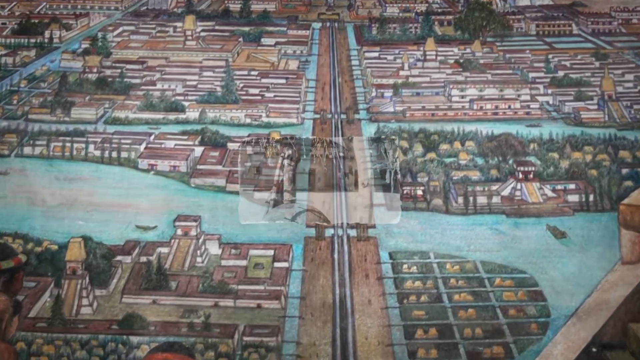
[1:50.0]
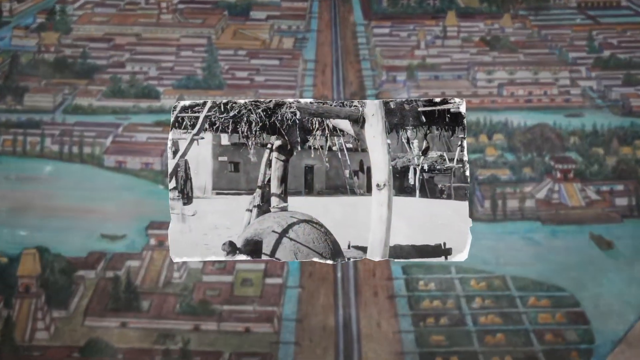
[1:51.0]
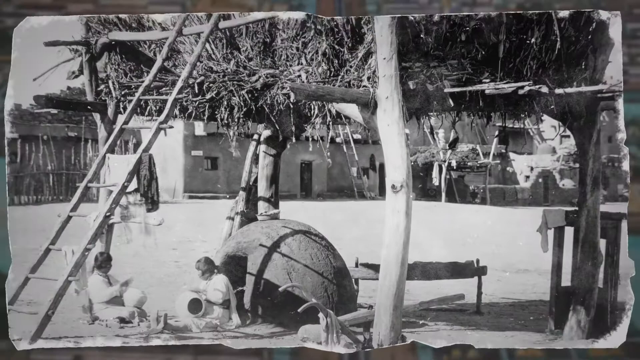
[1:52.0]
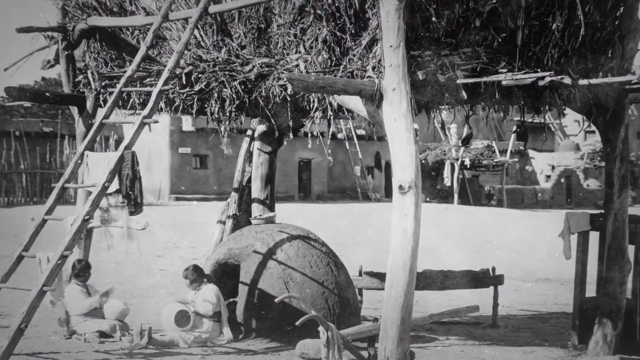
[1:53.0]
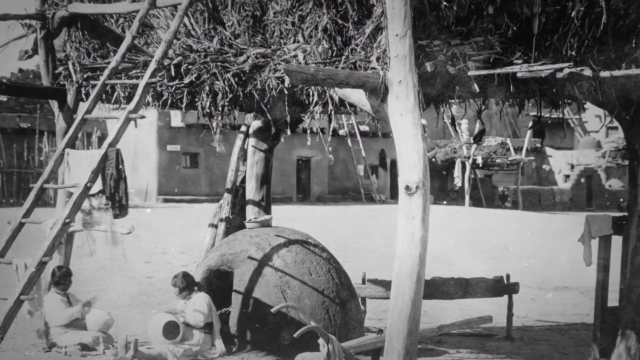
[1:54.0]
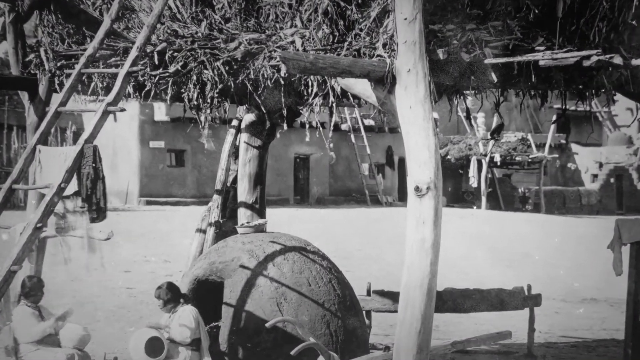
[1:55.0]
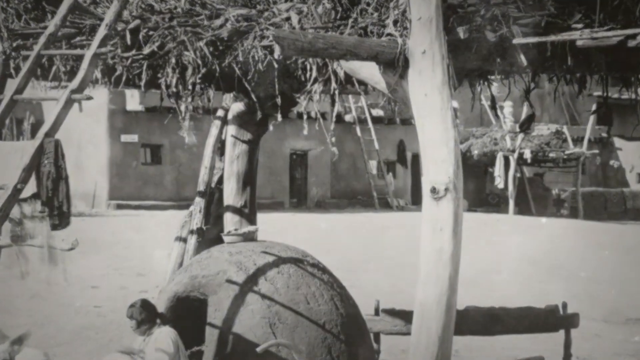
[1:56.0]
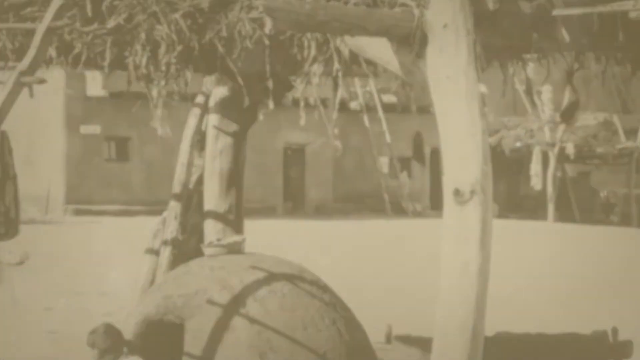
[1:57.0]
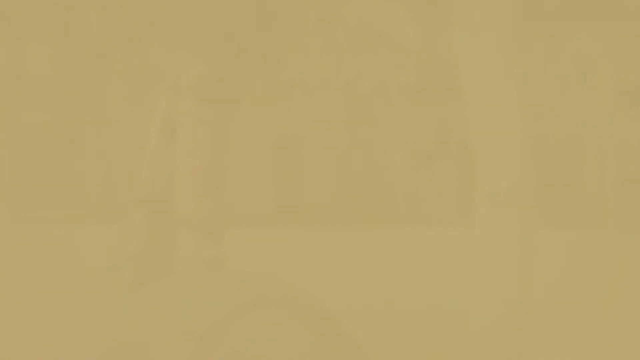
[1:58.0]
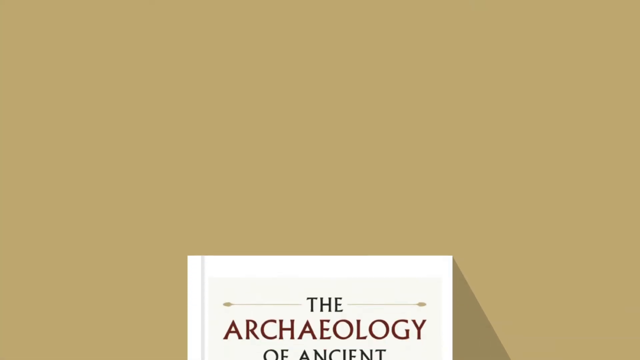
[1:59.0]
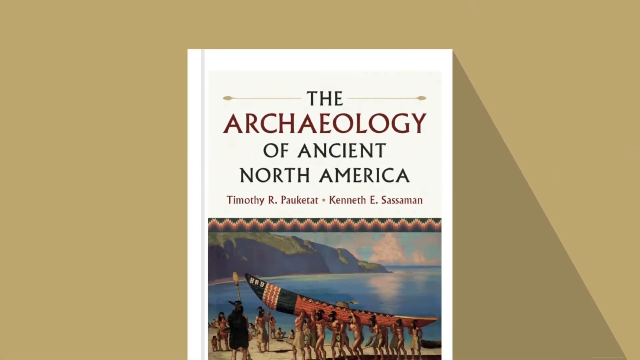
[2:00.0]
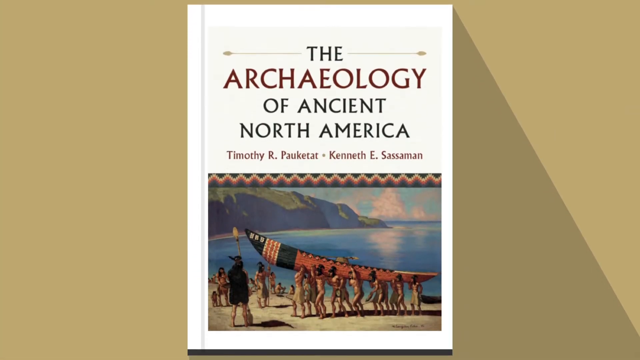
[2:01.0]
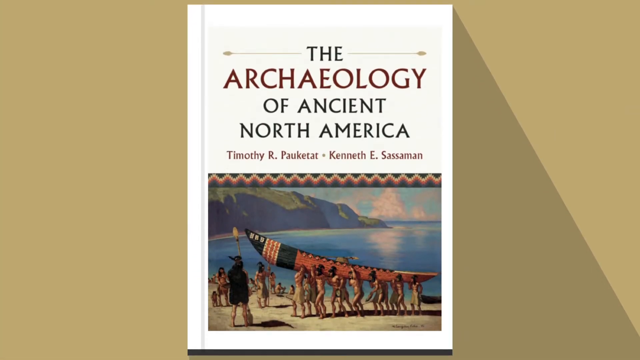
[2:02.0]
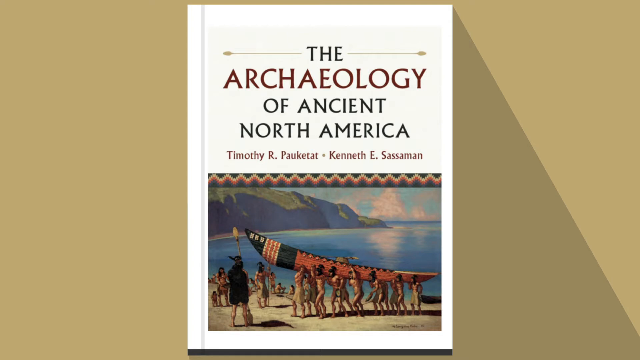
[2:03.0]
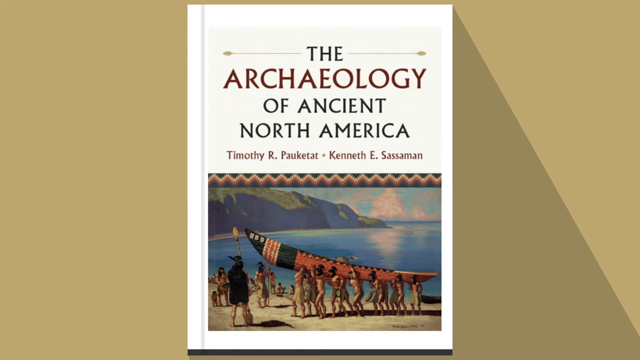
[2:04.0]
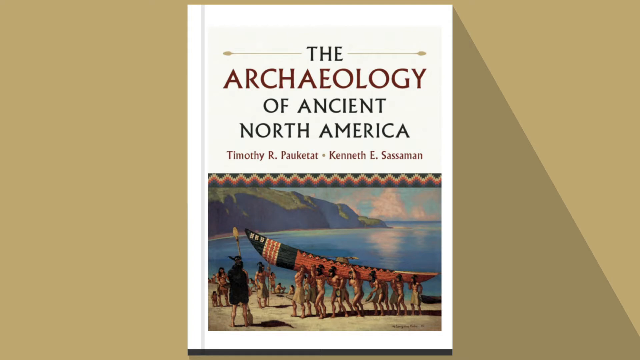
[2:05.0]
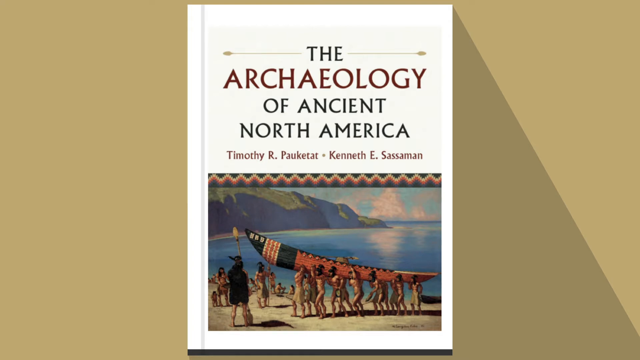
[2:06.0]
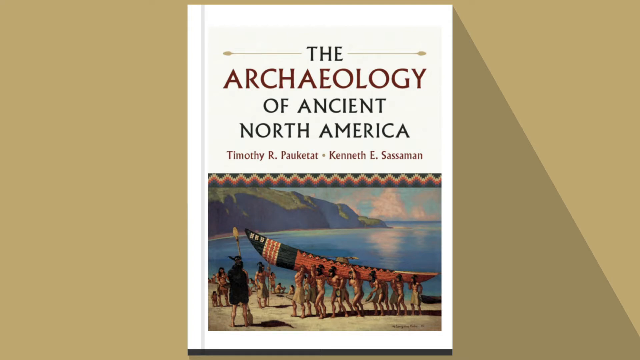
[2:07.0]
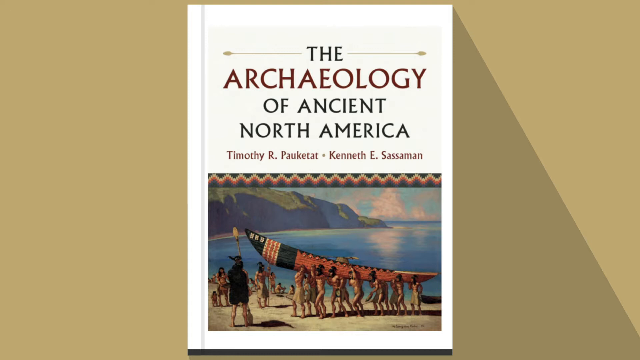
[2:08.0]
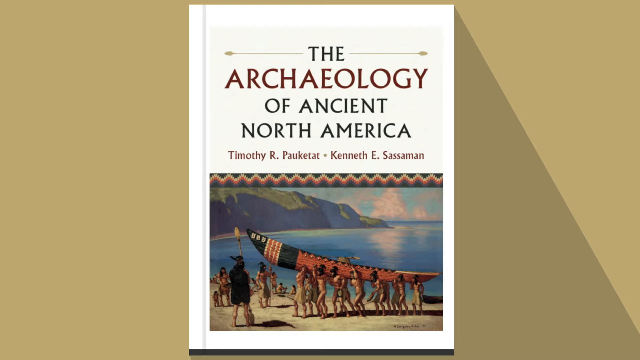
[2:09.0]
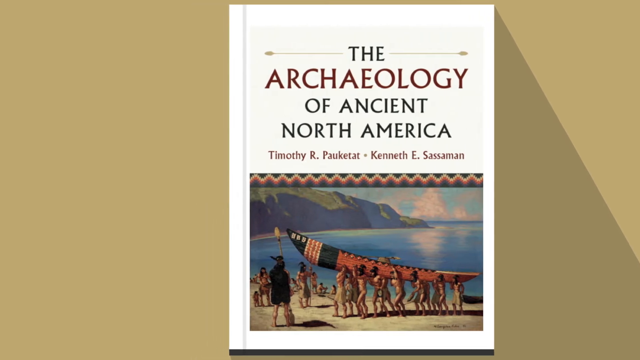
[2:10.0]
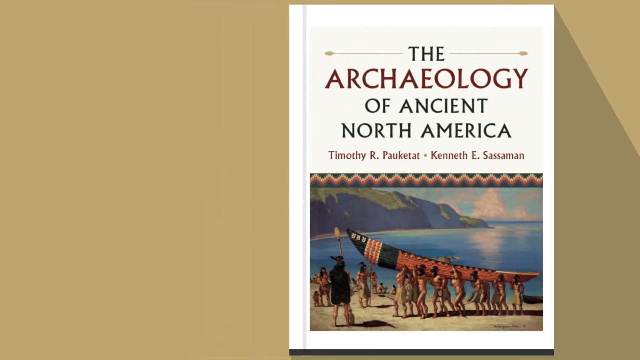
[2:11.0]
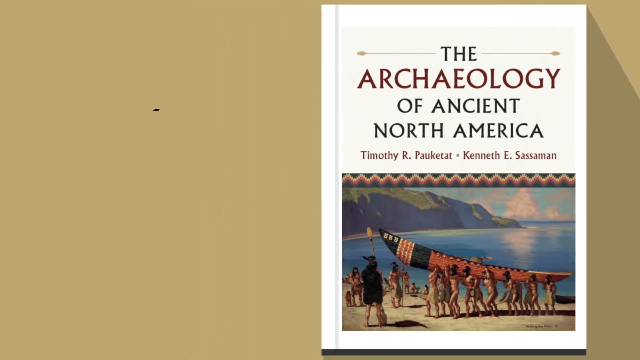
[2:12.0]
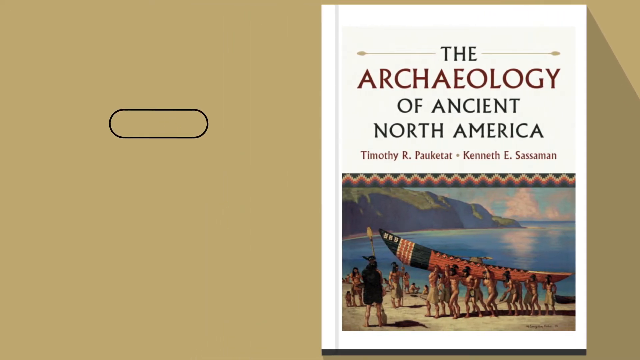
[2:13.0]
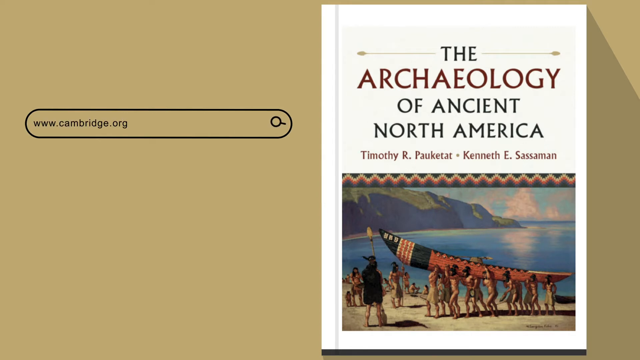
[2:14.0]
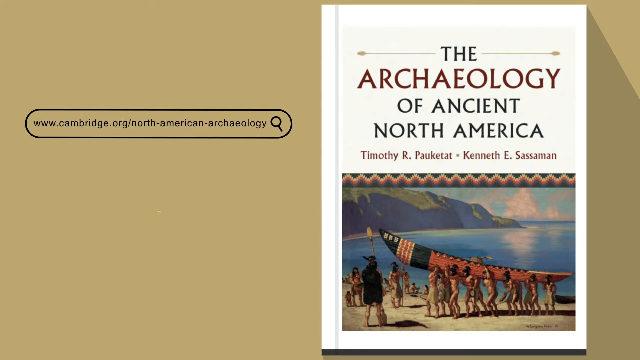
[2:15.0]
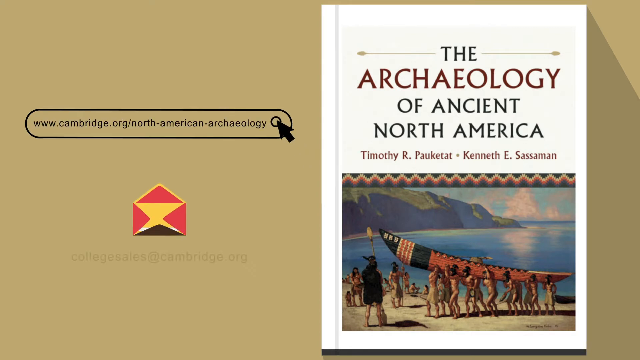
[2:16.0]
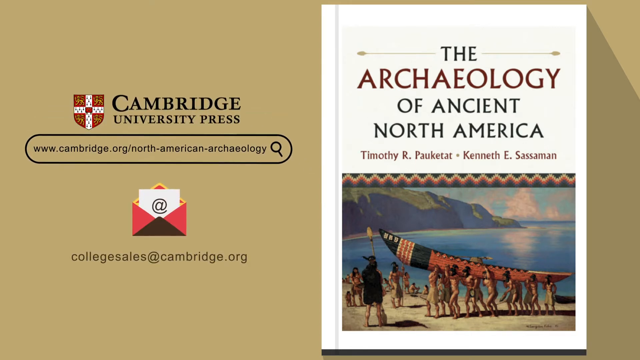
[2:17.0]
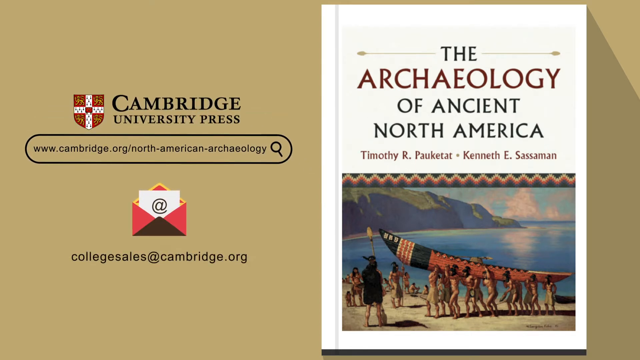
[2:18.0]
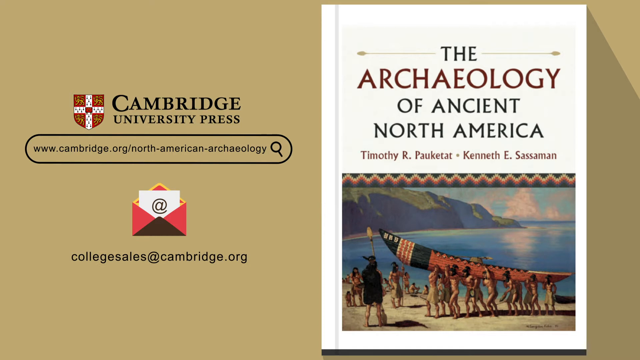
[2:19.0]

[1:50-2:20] An illustration seen from above shows an ancient city full of houses and buildings, with some sort of road running through its center from the bottom of the screen to the far distance at the top. The scene changes to a black-and-white photograph of a thatched roof with two people underneath it on the left and a ladder leading from the bottom left of the image up to the roof at the top, and the camera zooms in on it. The images change again, and the book cover appears once more: The Archaeology of Ancient North America by Timothy Pauketat and Kenneth E. Sassaman. It is set against a gold background with some shadowing and a couple of isosceles triangles in dark and light gold to the right of the book, representing shadows from an implied light source.